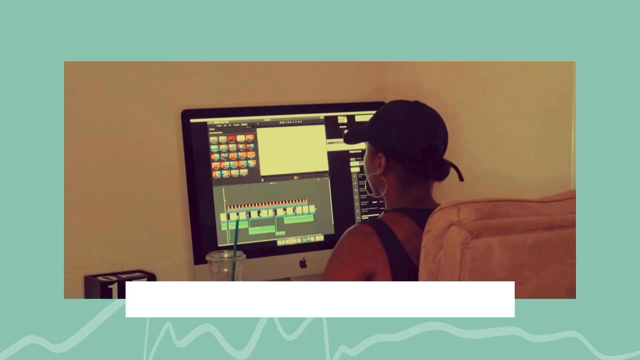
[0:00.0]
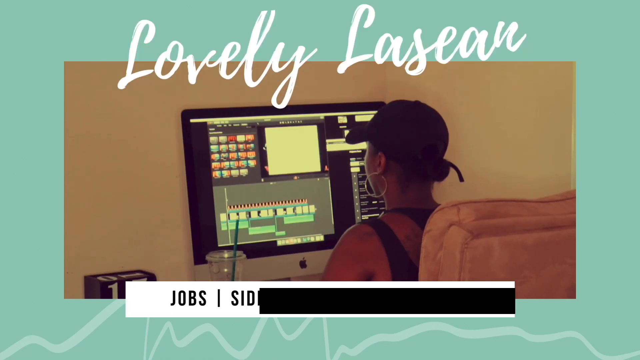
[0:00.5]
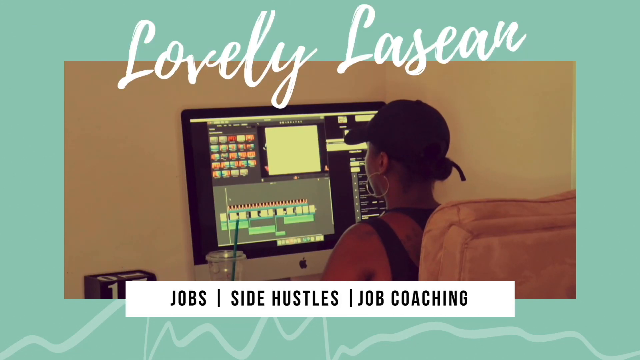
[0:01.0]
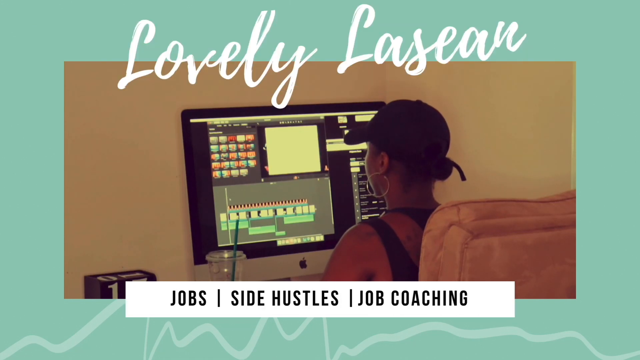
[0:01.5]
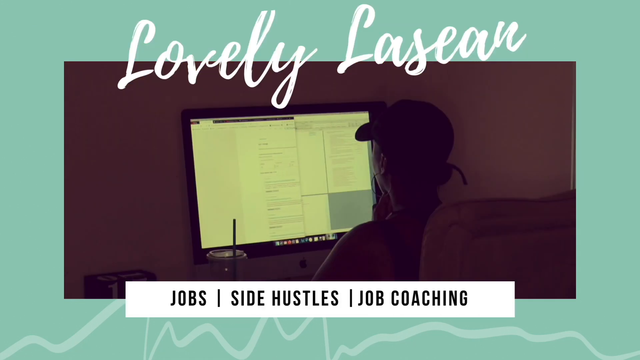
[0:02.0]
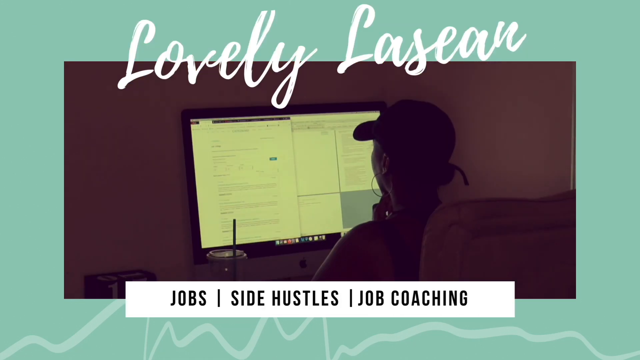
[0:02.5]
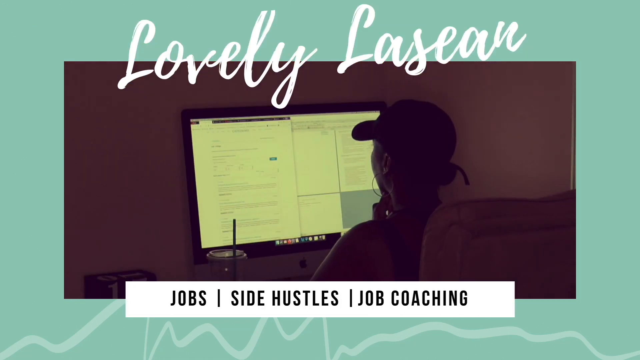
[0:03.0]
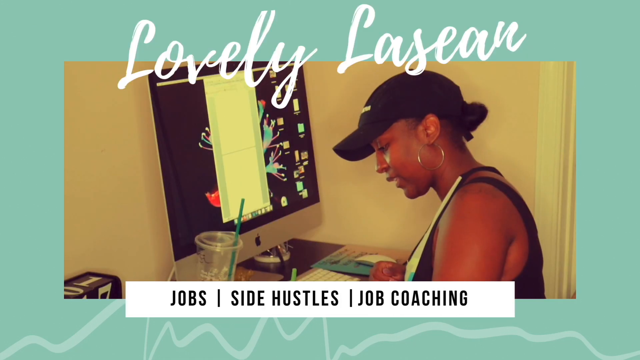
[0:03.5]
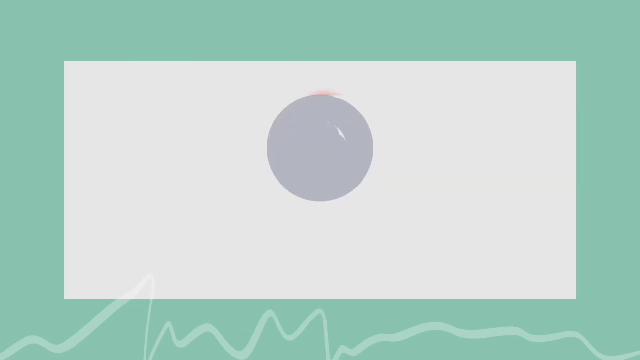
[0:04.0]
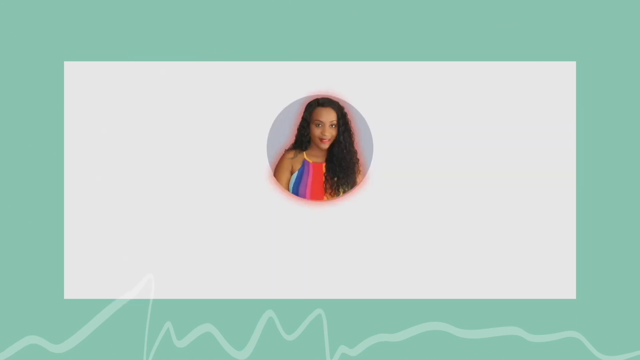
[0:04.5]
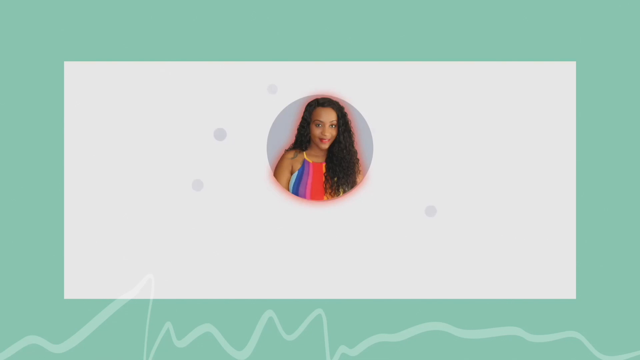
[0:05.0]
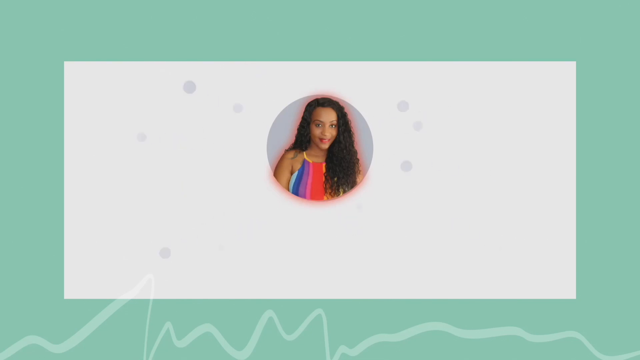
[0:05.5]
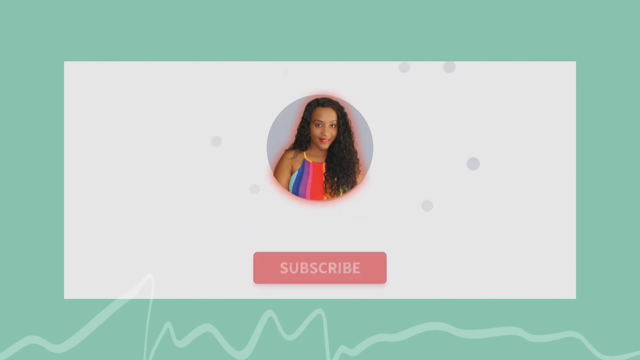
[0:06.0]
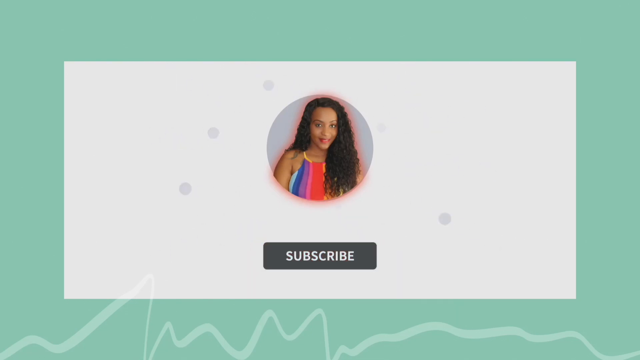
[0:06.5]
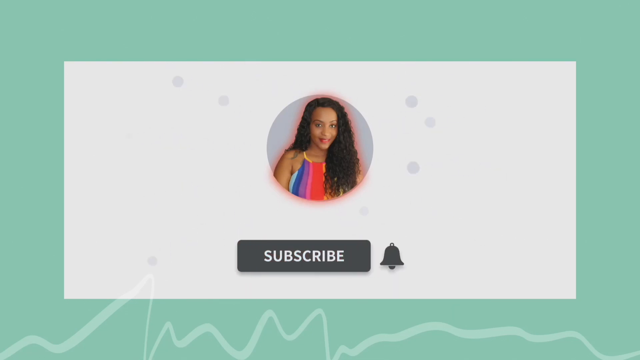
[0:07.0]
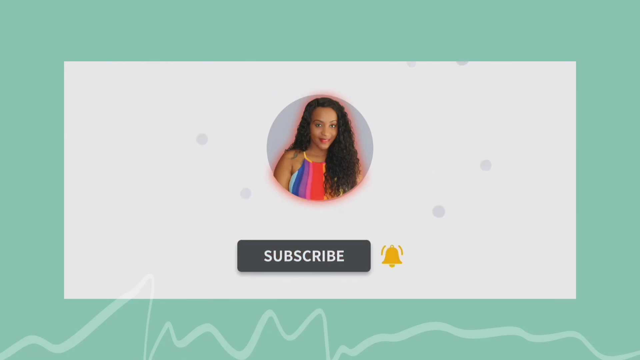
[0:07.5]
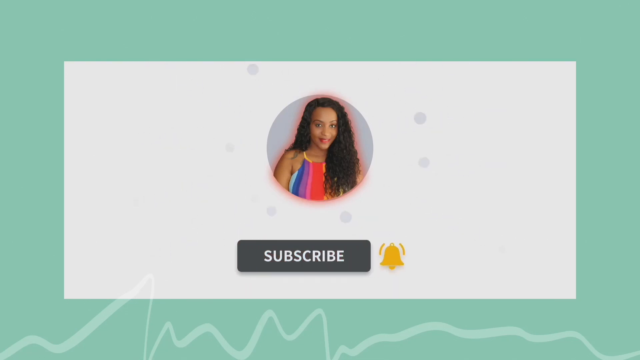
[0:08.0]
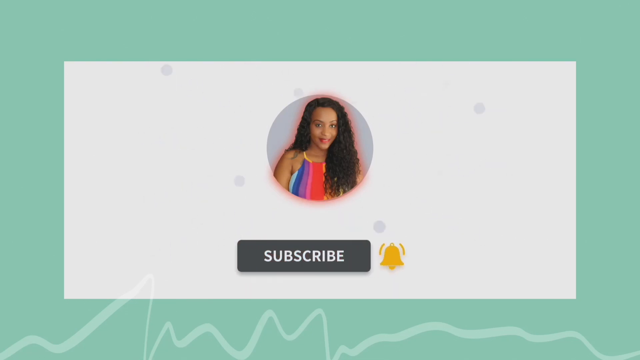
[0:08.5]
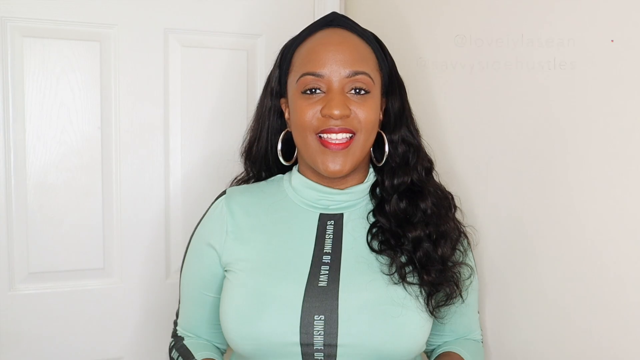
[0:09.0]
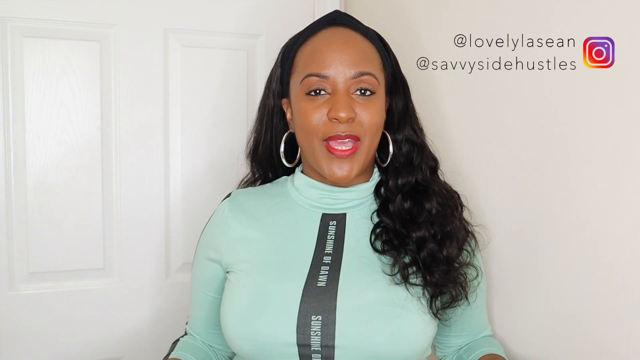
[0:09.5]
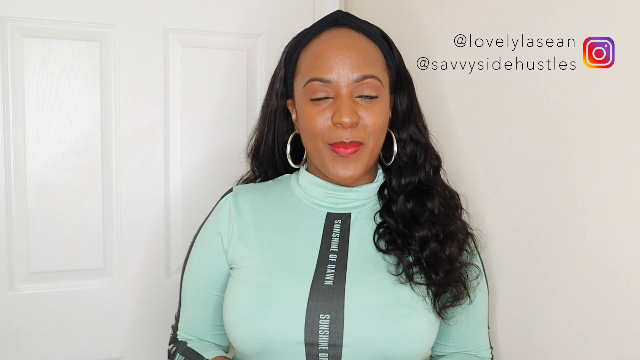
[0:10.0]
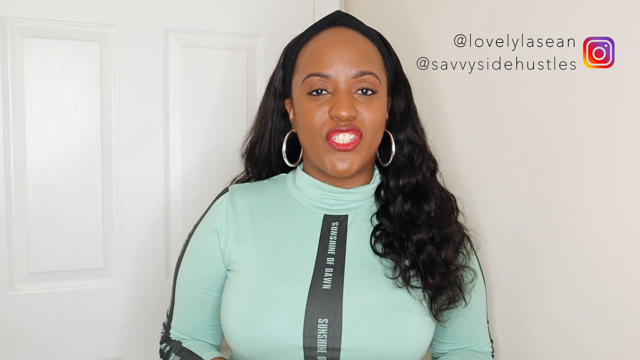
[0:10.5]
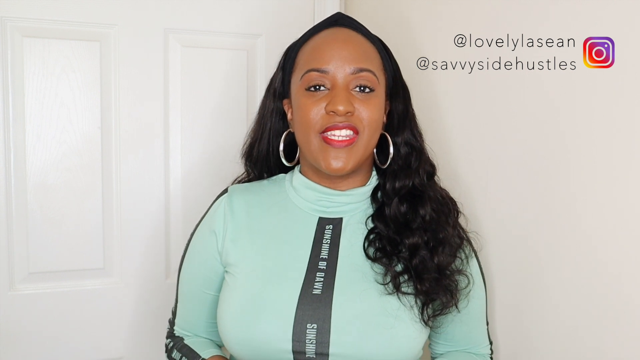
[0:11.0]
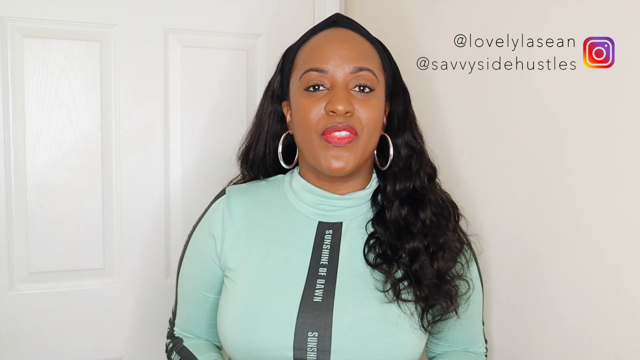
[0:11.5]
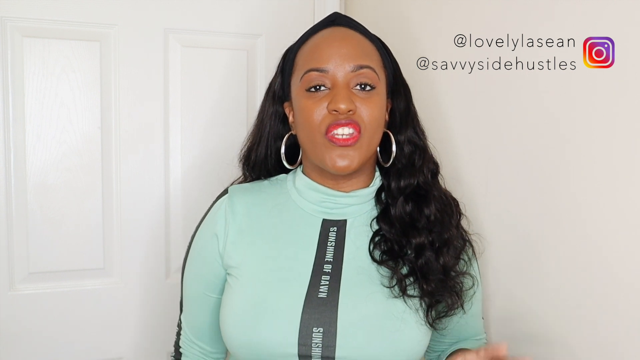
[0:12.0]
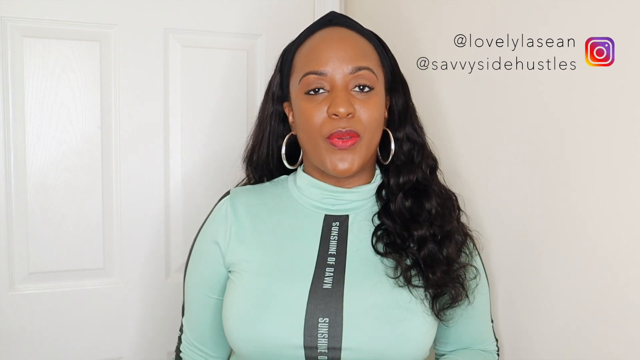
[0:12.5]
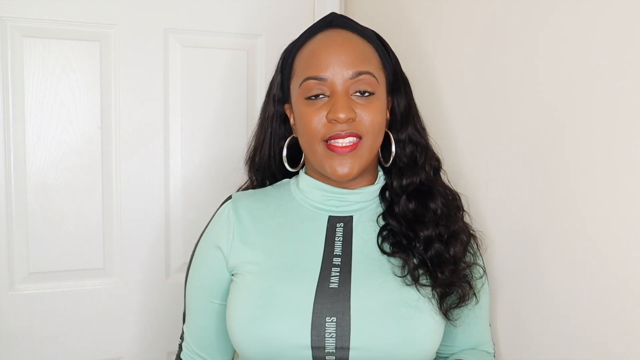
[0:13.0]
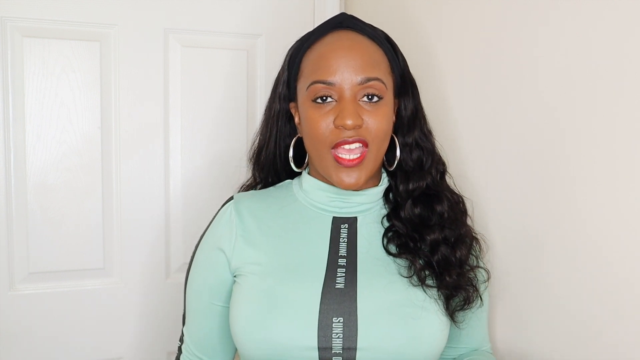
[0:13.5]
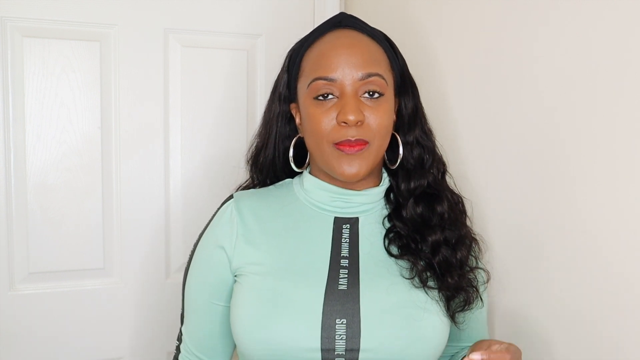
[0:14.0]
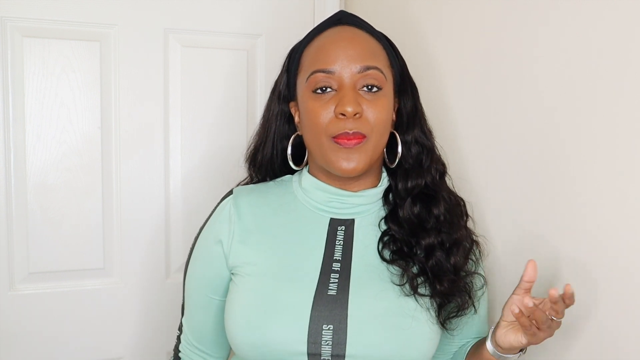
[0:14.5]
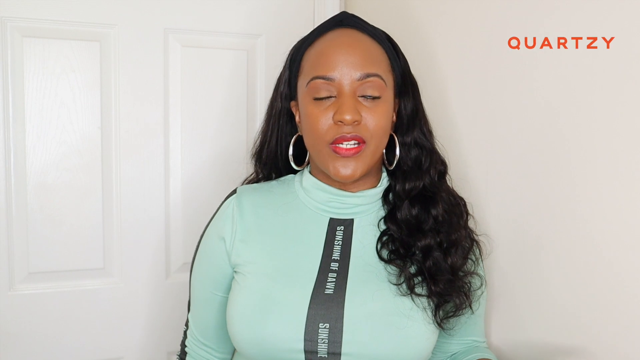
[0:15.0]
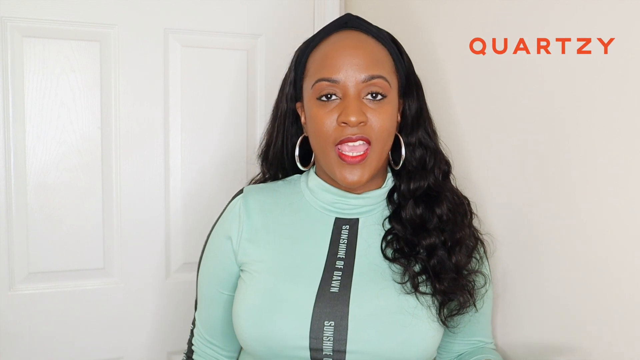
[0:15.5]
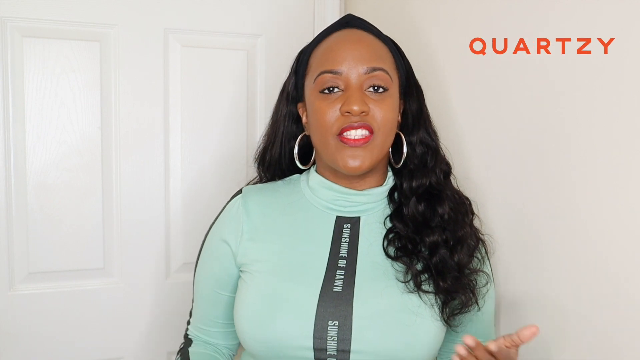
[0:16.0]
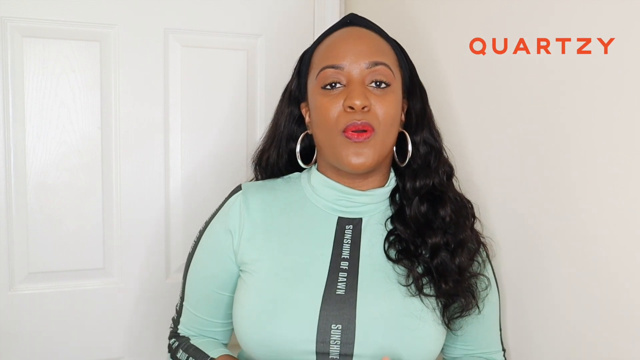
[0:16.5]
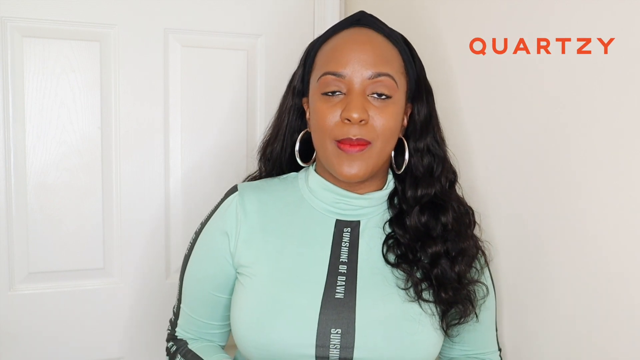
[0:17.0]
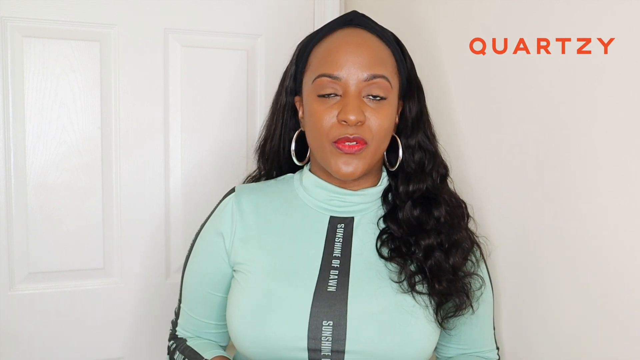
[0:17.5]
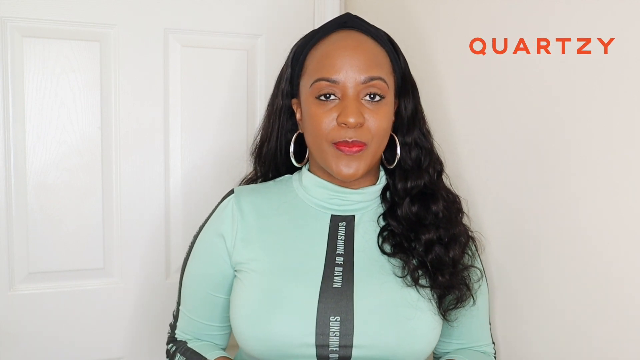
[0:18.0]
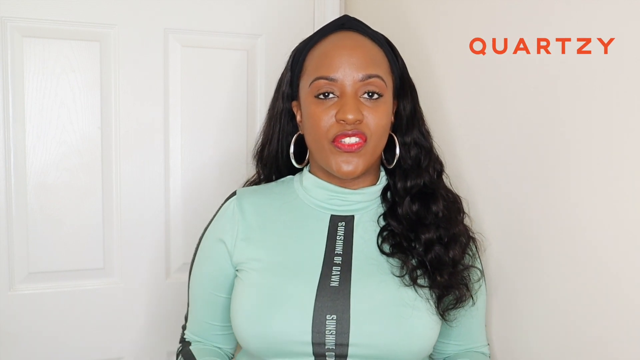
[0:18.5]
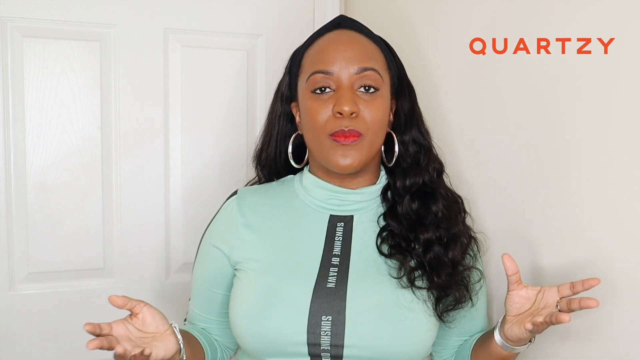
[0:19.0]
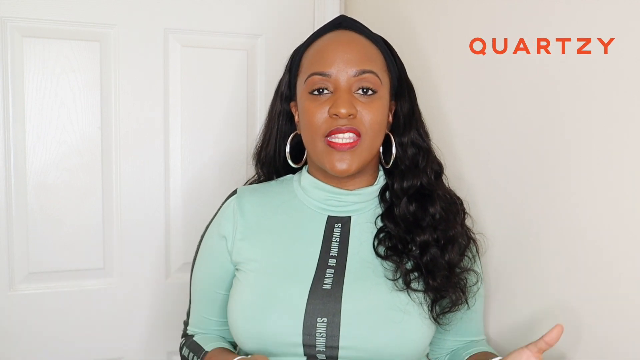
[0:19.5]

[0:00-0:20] The video opens on a teal background with a video inset in the middle. The inset shows a white background with a huge computer screen whose contents are blurred out. A Black woman sits in what looks like a big, fluffy pink office chair. She wears a black hat and big silver earrings, and looks like she may be wearing black double tank tops; her shoulders and arms are visible. At the bottom, a white box reads "job/side hustle/job coaching." What appears to be a calendar is just below the computer screen, and she seems to have some kind of iced coffee with a straw next to her. The screen then gets very dark and a block of writing appears. Next, she is in the same room from a different angle, more from the side and from the back. The huge computer screen has a number of apps and some writing on it. More of her desk is visible, and it looks brown. Part of the calendar is visible, along with an empty cup of what appears to be iced coffee. Seen from the side, the young Black woman still wears her black hat, her hair kind of in ponytails, and a silver earring; she writes something while looking down and appears to be wearing a double black tank top. The center then switches back to a white box on the teal background, showing a picture of a young Black woman with long curly hair that goes well past her shoulders. She looks like she is wearing a tank top with rainbow colours on it, and bubbles come out from it. The word "subscribe" appears, followed by a notification bell. The woman from the picture then stands next to a white wall and a white door. She wears a teal long-sleeve shirt with a black band down the center that has writing on it, a black headband holding her hair back, her hair curled past her shoulders, a silver earring, and makeup. She talks to the camera animatedly, moving her hand. In the upper right corner her Instagram names appear, apparently lovely Lisa and savvy side hustles, and to the right the word "Quartzy" appears. She keeps talking and moving her hands.